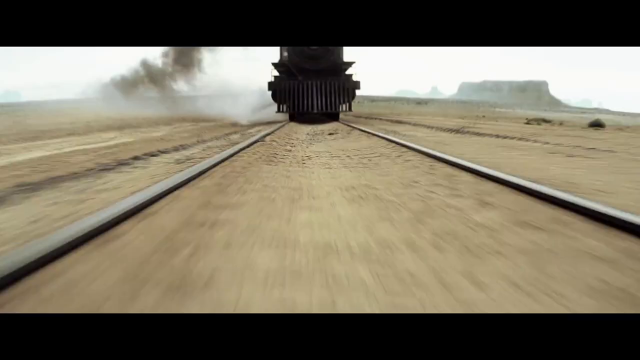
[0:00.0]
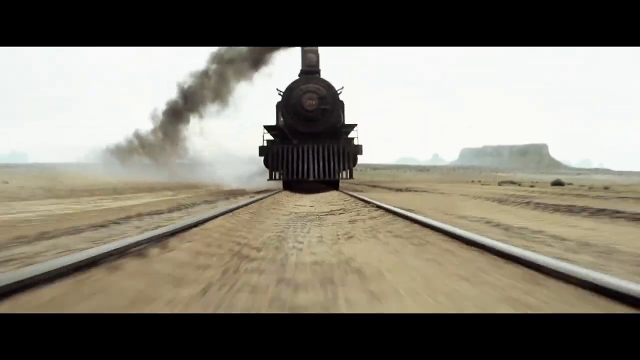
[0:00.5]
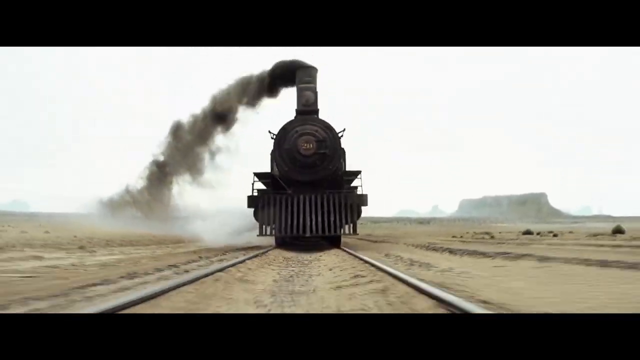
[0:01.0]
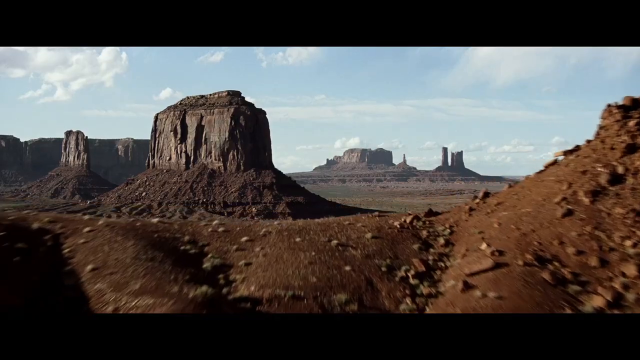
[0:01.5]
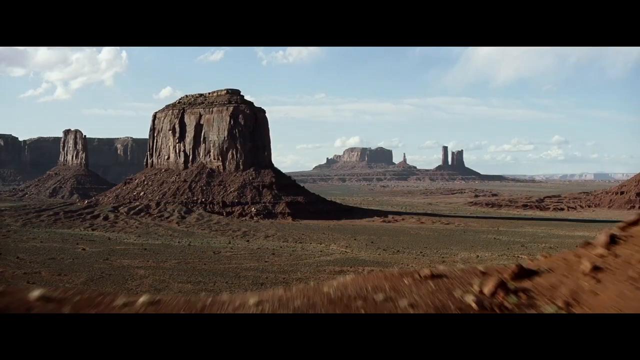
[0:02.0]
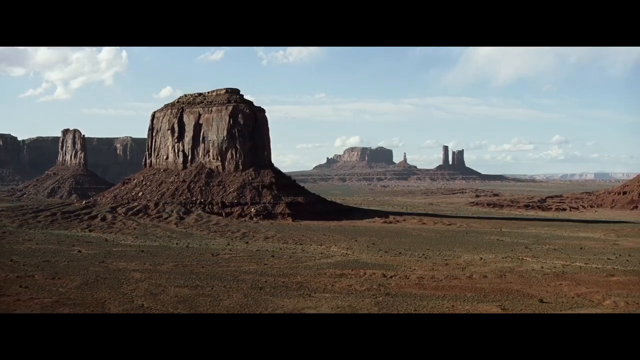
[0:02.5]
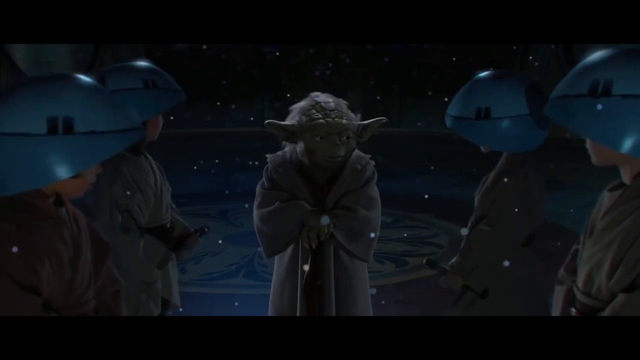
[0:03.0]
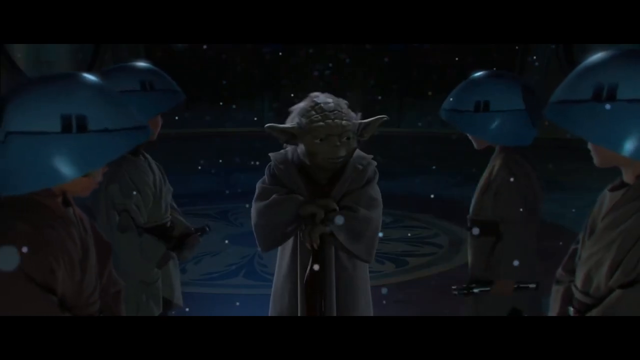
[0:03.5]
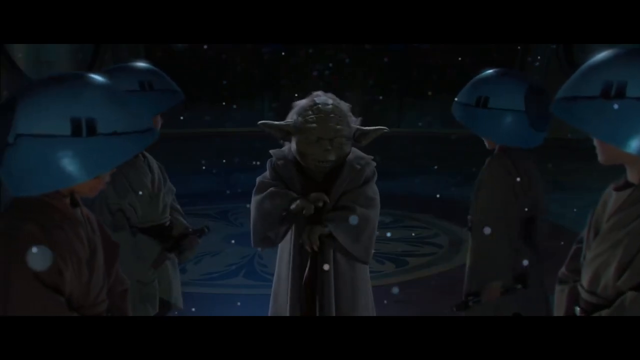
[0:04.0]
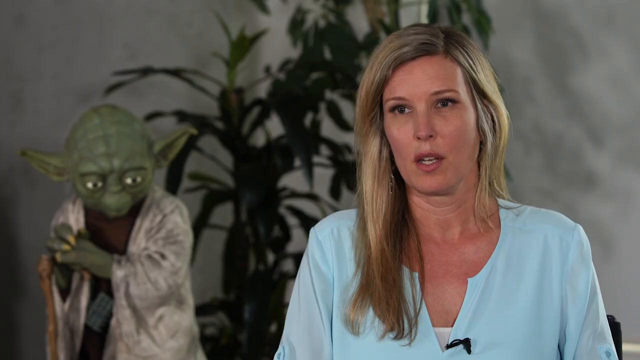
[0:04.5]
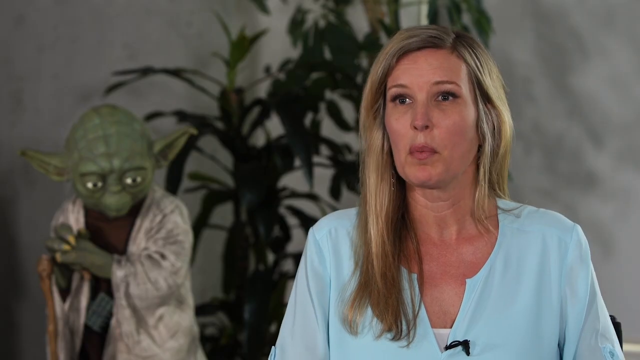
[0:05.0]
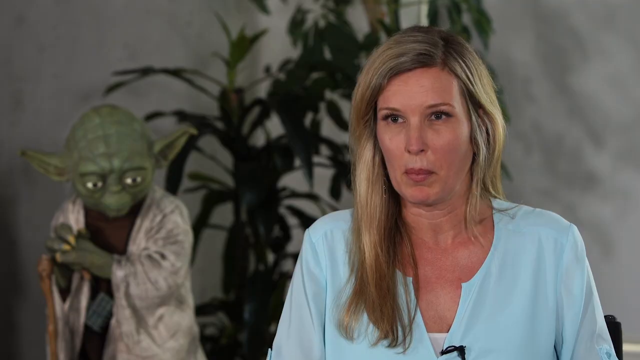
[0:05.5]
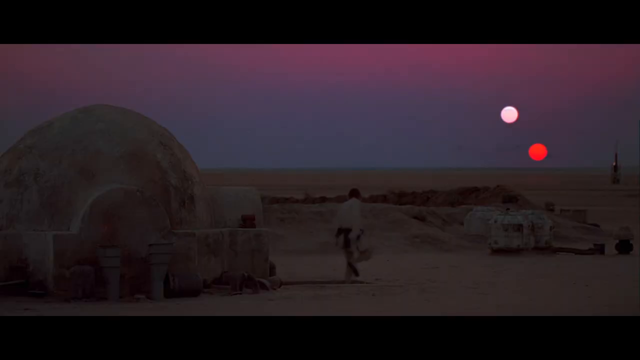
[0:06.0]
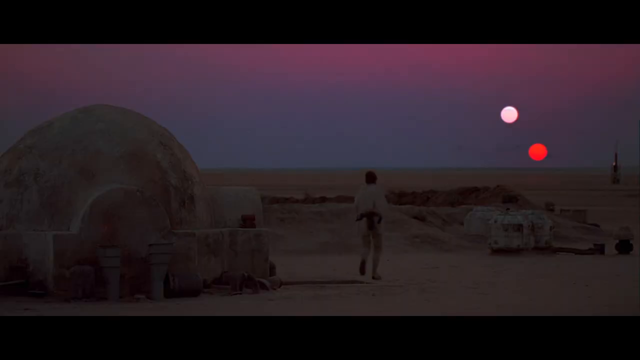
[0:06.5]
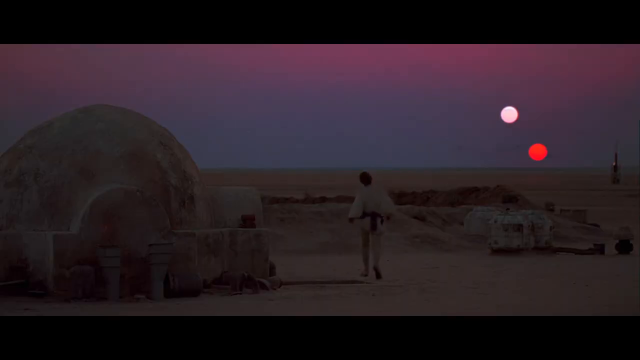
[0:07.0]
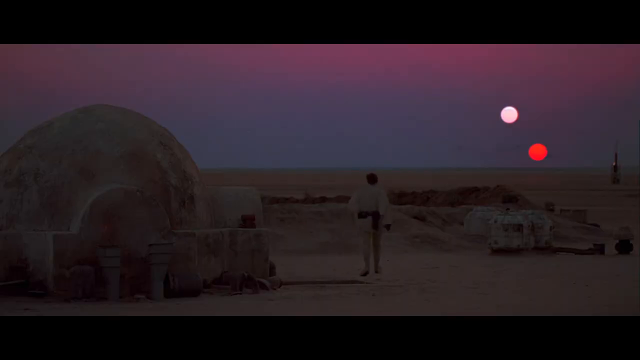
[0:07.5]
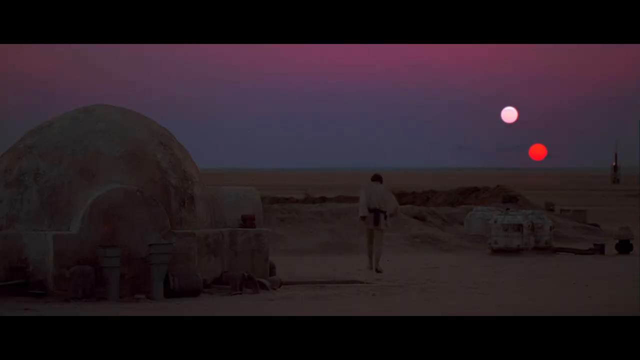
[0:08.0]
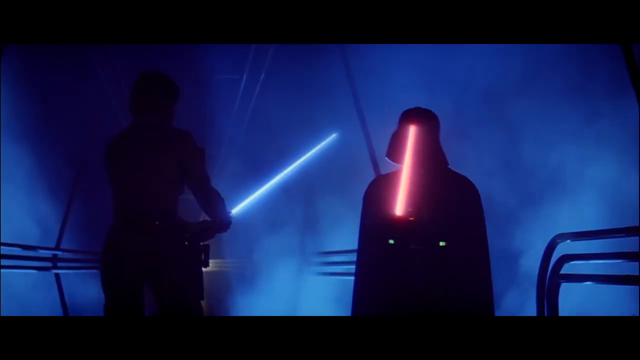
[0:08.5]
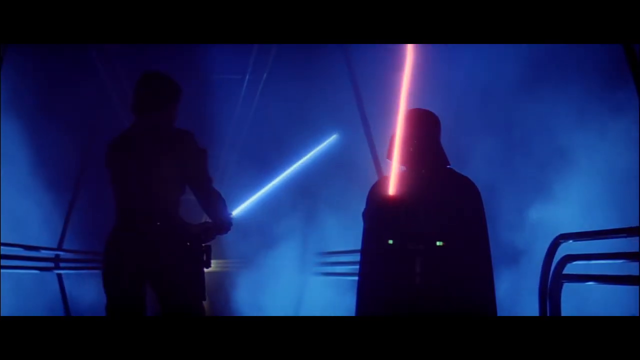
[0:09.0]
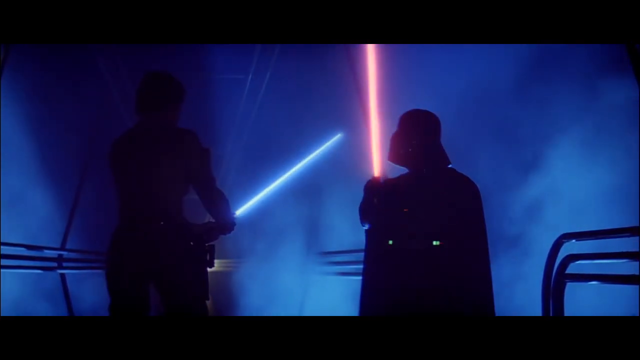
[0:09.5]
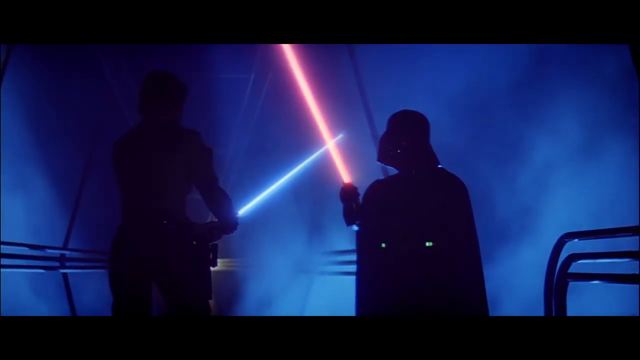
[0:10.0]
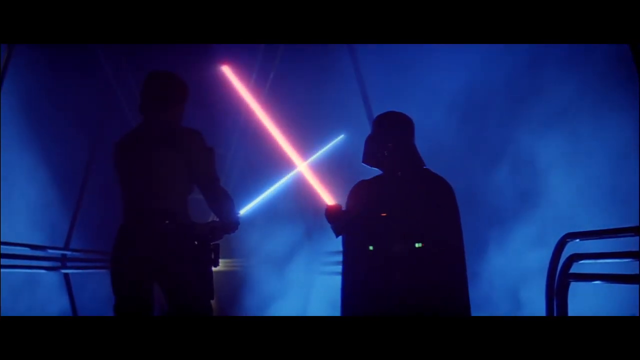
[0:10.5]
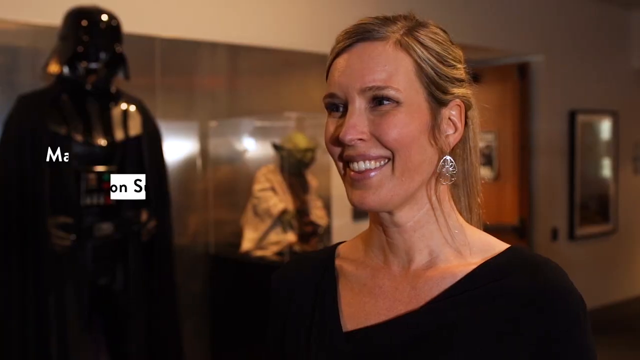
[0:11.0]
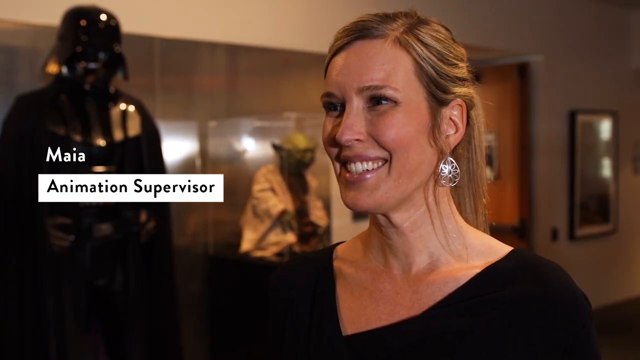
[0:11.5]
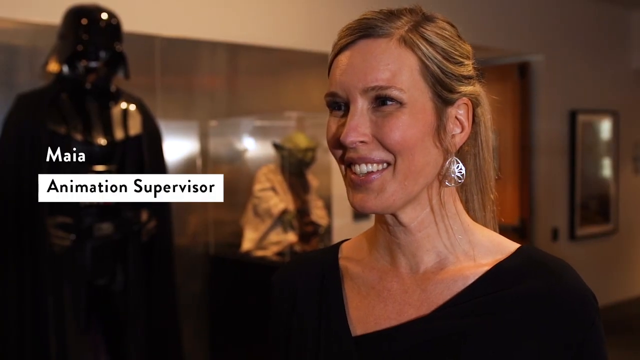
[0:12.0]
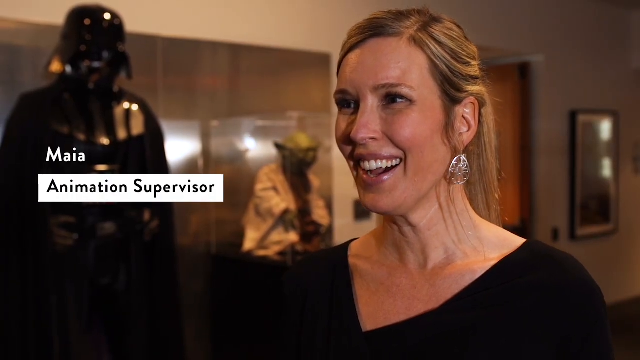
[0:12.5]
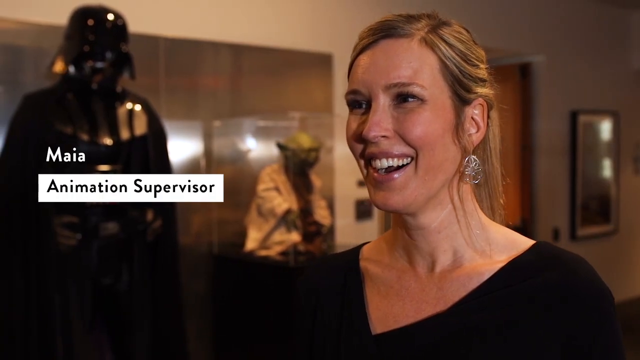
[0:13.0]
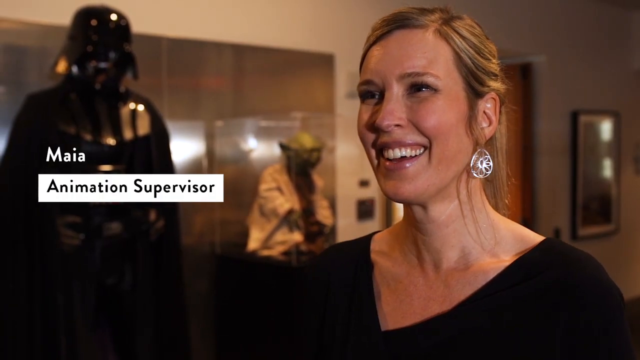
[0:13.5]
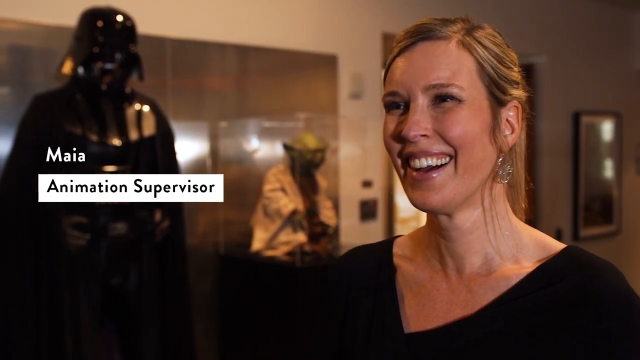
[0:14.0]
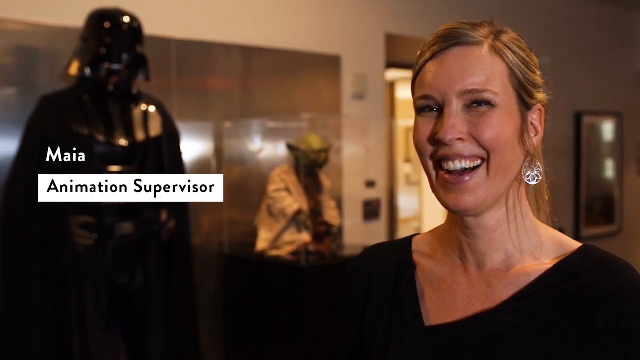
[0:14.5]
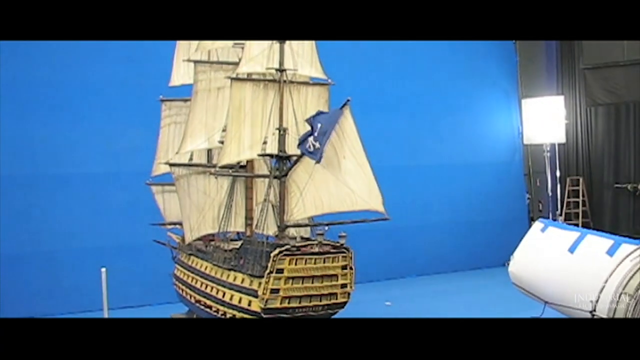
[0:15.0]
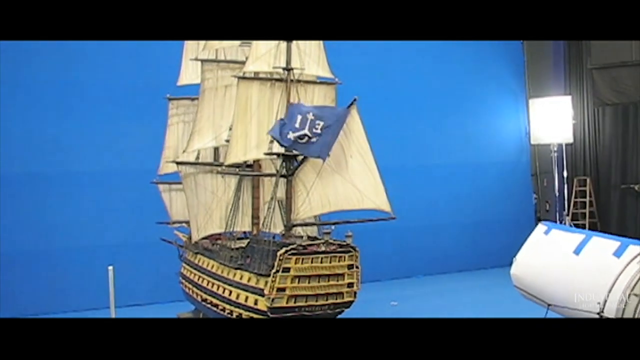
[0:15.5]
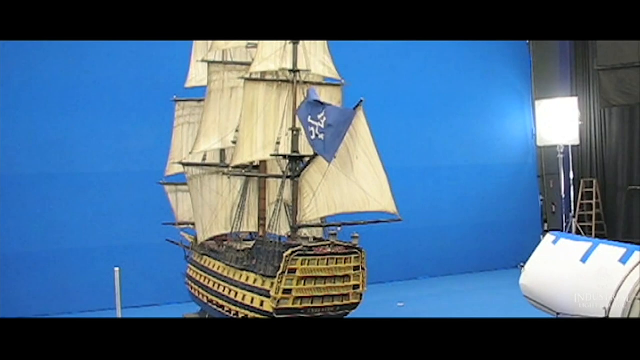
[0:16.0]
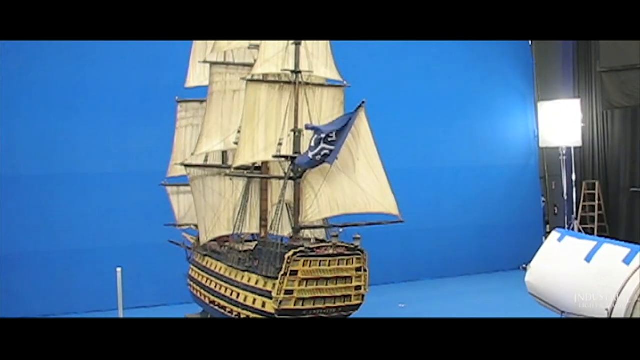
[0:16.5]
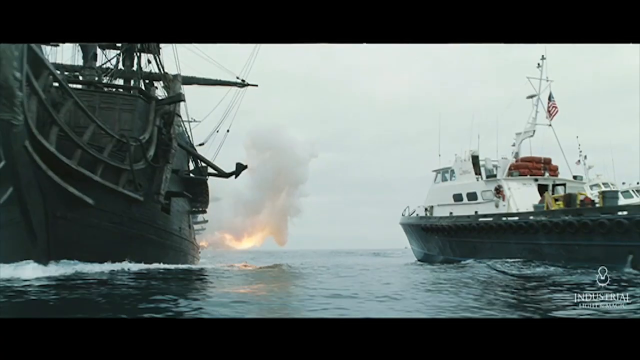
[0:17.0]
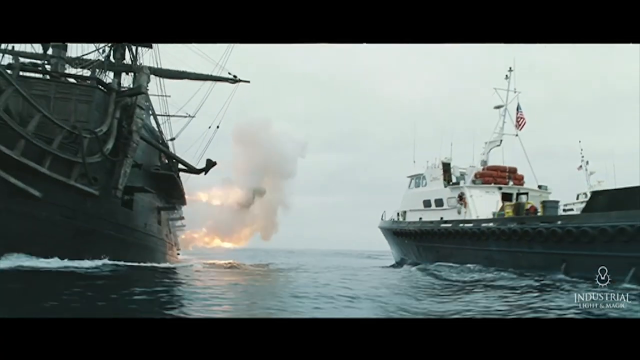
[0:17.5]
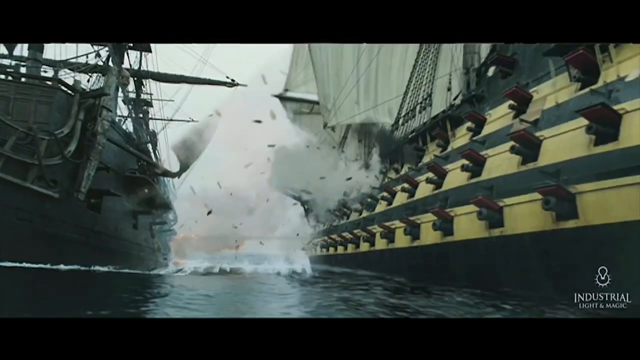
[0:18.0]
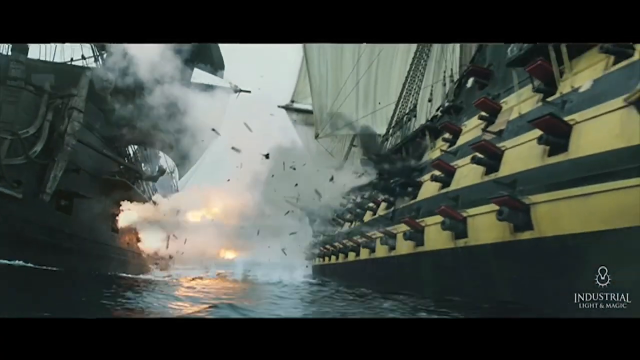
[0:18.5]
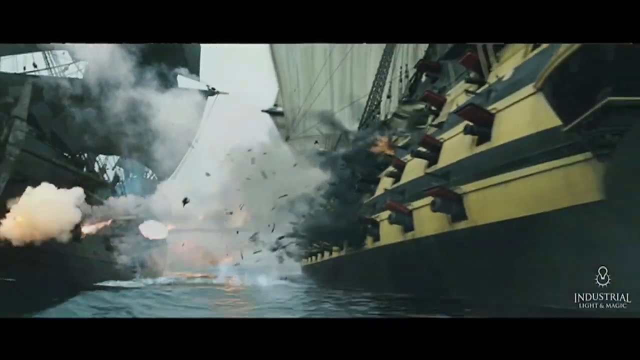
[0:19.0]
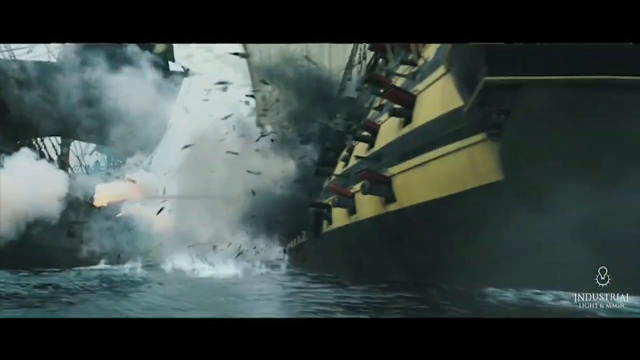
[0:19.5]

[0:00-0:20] A train comes down a track at high speed. The video cuts to a wide shot of a mountain, then to Yoda and a Star Wars scene with Luke coming out of a hut. The two suns of Tatooine appear, and Luke Skywalker and Darth Vader fight with lightsabers, one blue and one red. An animation supervisor is introduced, along with other special effects and animation supervisors. A scene from Pirates of the Caribbean follows, showing how that shot was made. The video compares what appears on screen in big blockbuster movies with how the special effects were done.